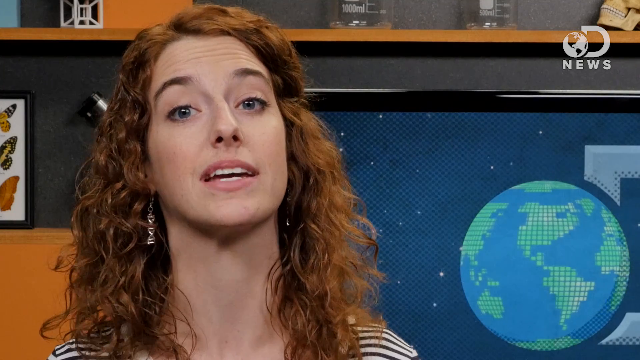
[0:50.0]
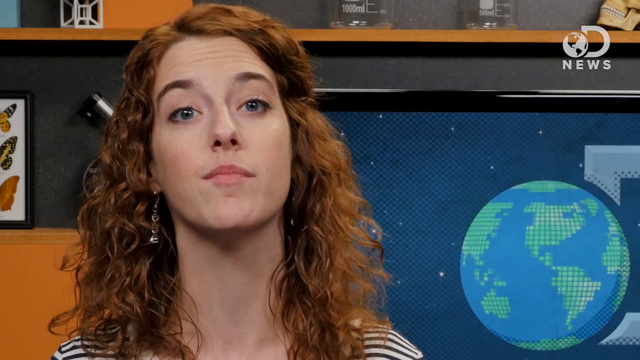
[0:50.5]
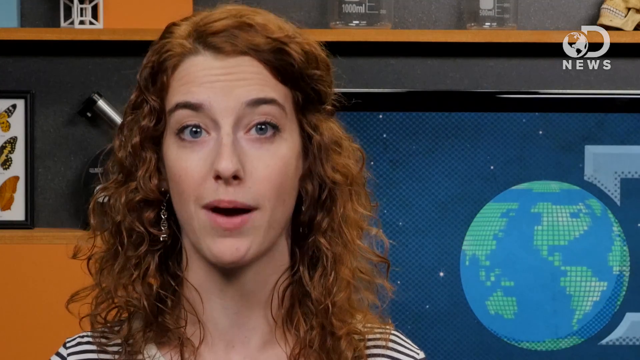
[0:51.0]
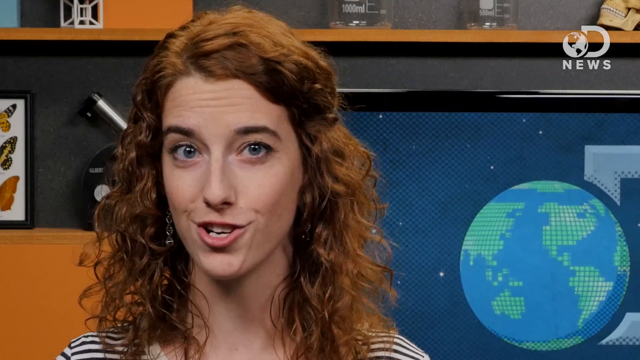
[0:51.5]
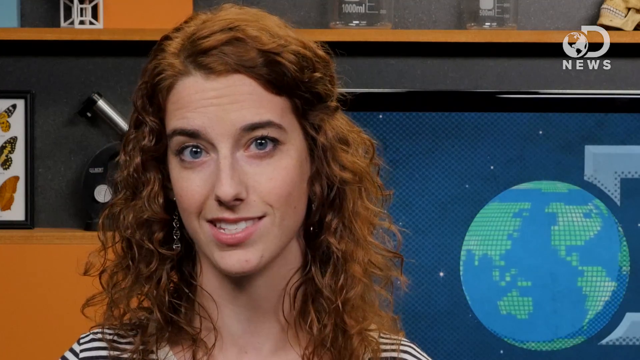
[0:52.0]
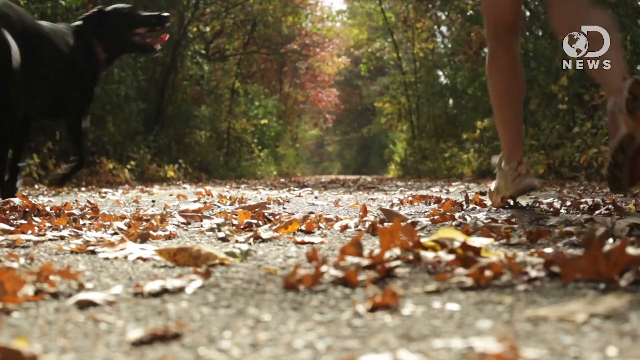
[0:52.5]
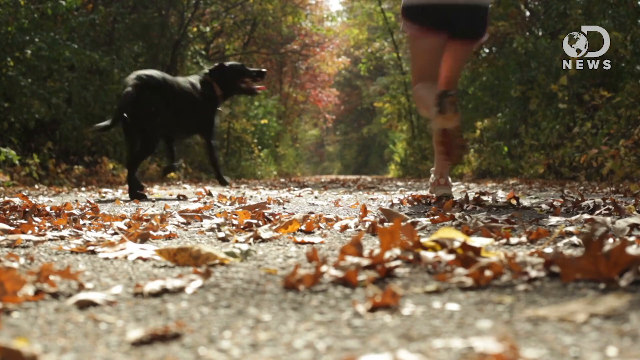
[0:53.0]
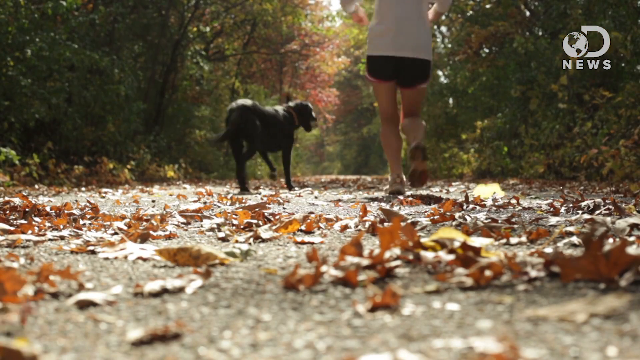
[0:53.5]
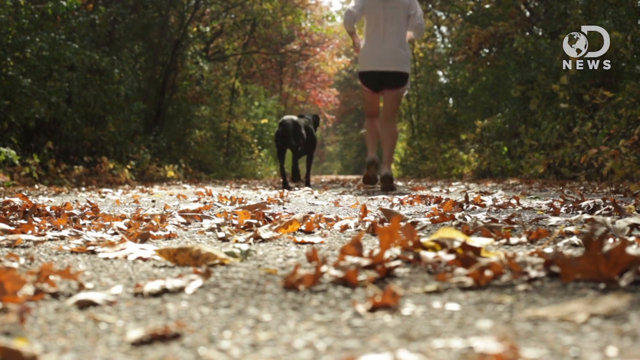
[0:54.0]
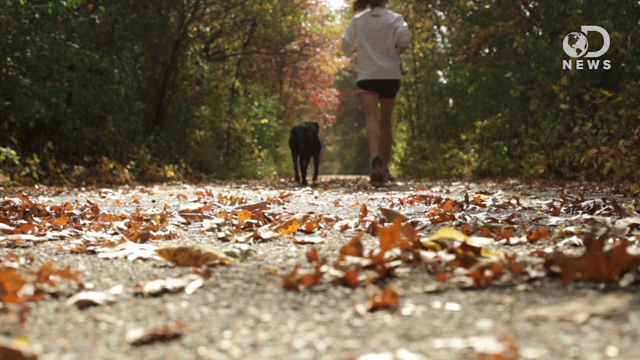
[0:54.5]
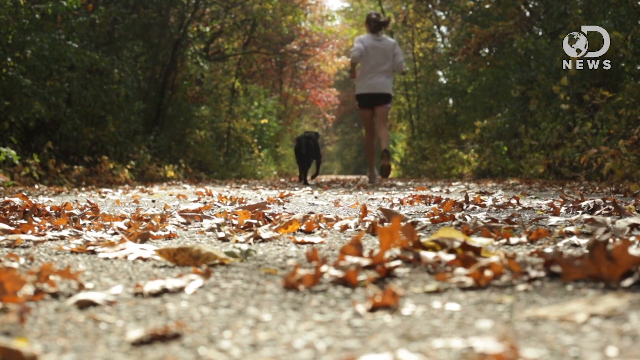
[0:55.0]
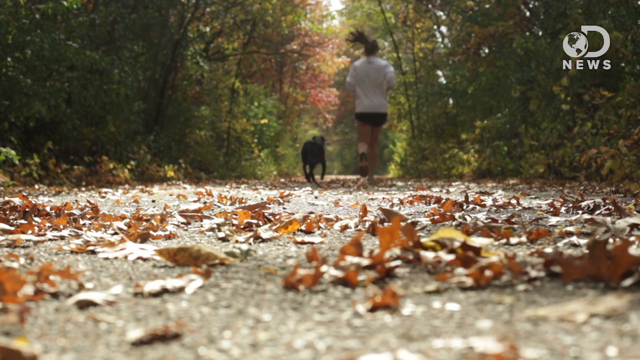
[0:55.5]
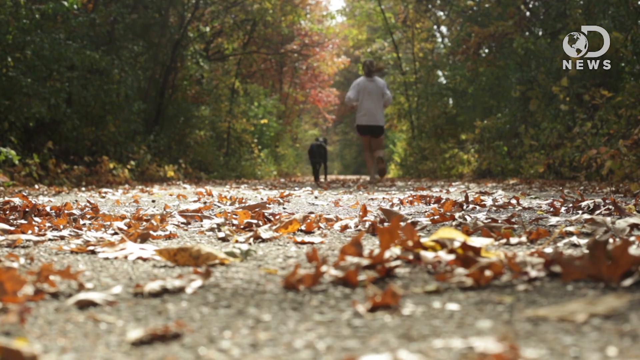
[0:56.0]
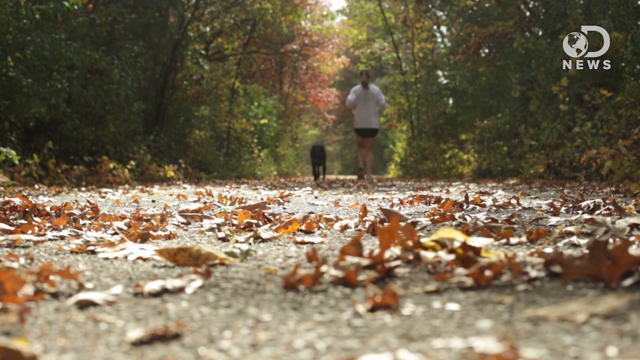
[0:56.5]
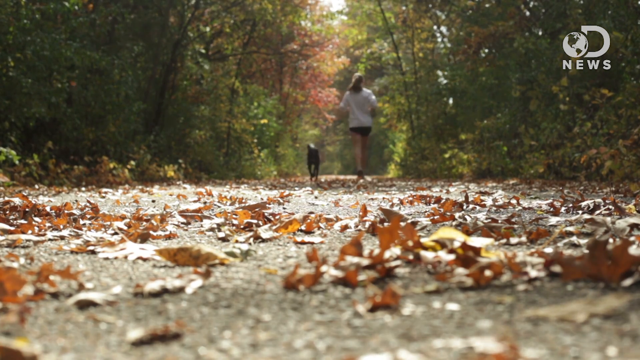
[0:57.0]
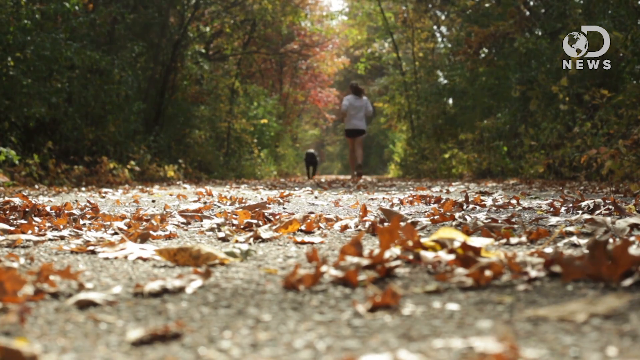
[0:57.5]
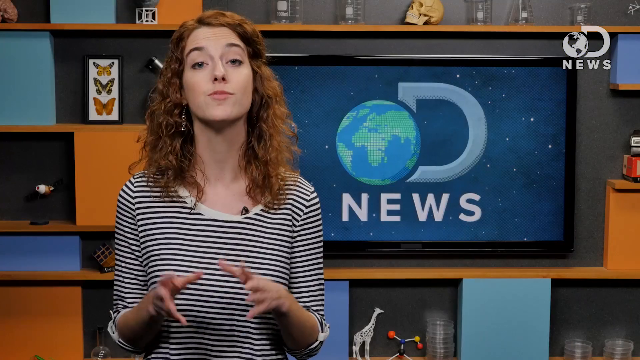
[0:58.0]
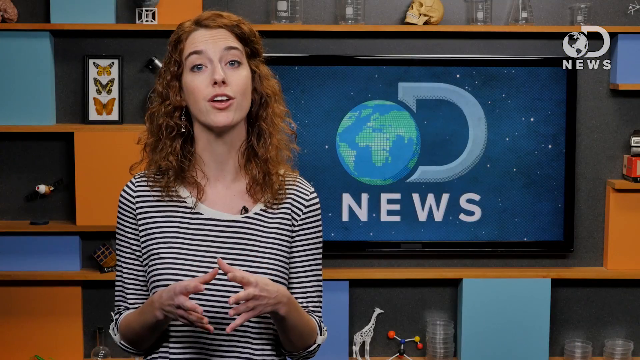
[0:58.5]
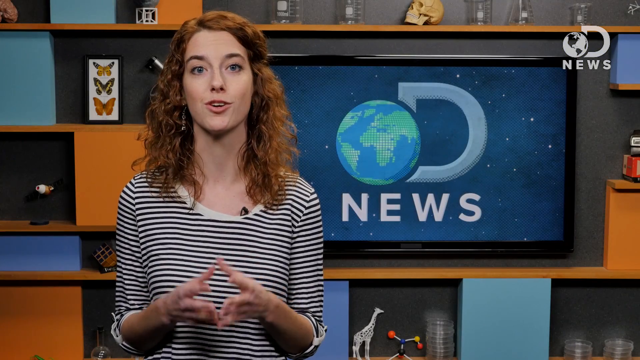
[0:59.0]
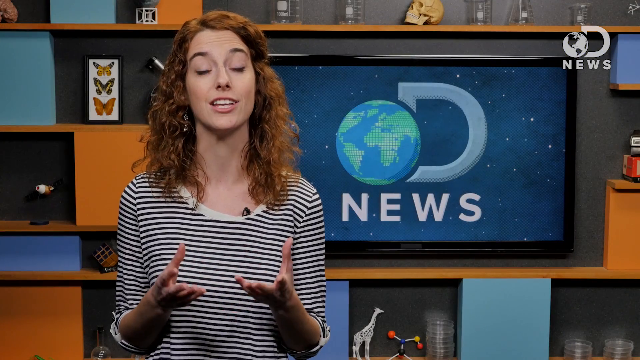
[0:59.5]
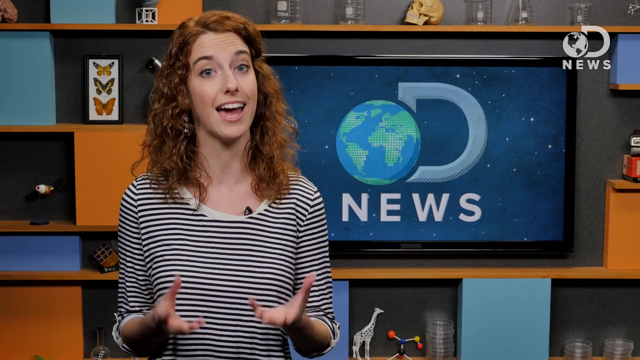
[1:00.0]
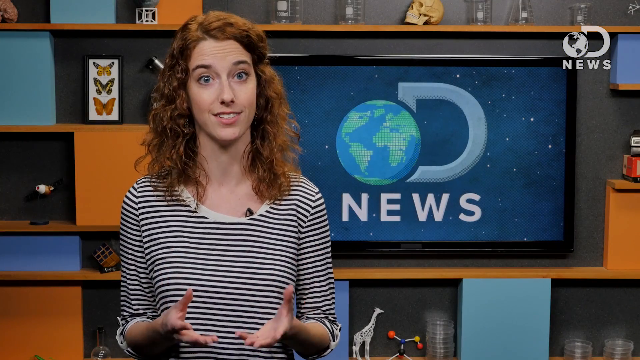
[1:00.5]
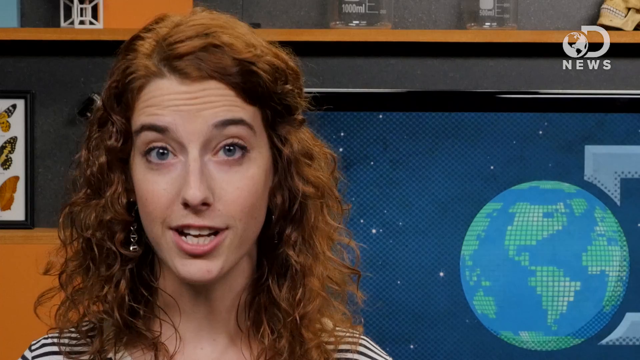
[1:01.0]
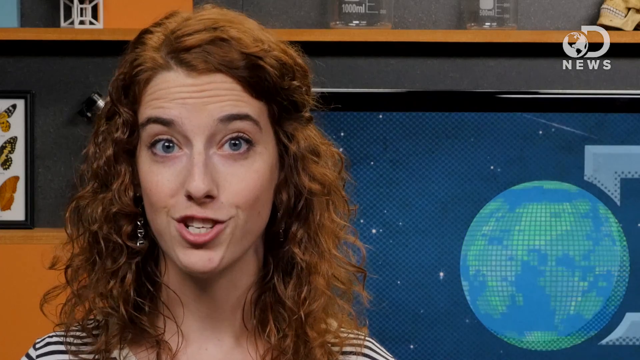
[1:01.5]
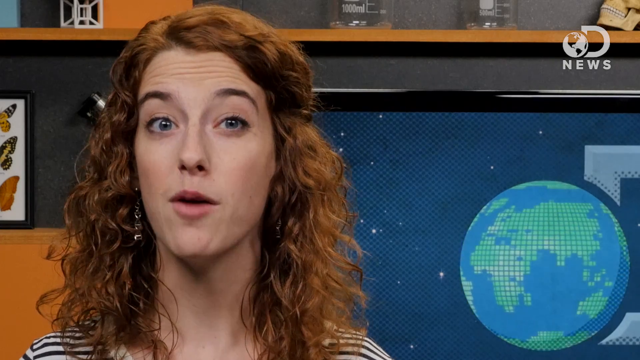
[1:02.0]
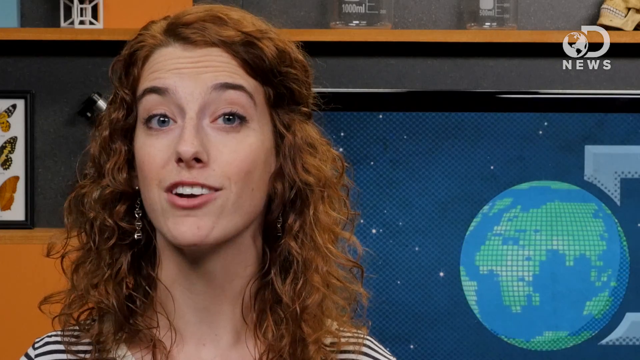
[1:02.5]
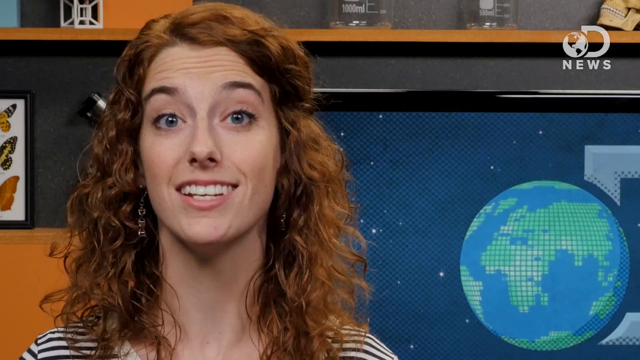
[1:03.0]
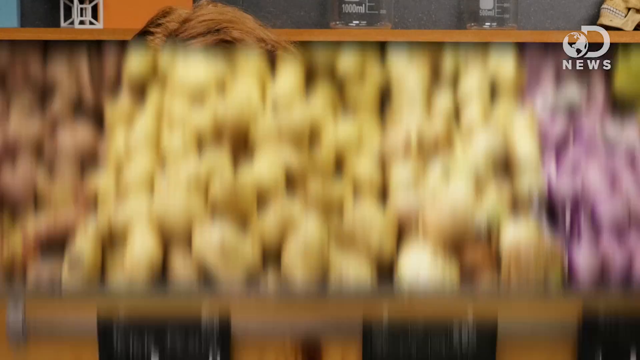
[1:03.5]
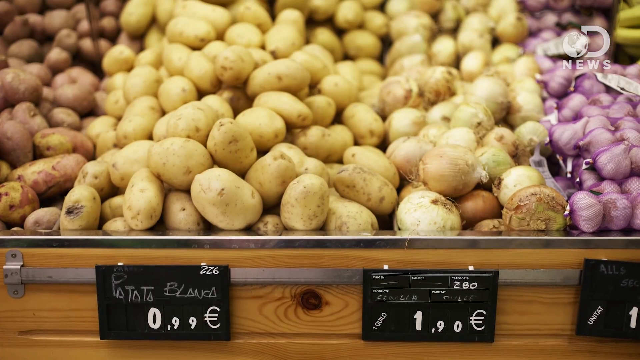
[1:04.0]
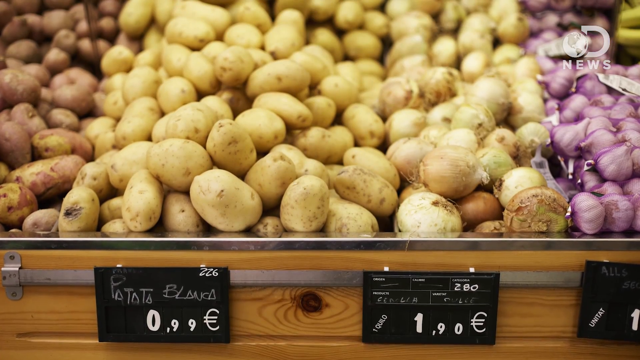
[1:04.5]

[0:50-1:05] A woman is in front of a TV showing a spinning earth and the word "news." The host, a woman with long, curly red hair, speaks. Next, a woman jogs on a trail with her dog, a black Labrador. The video moves back to the host speaking, then to the woman jogging on a trail through a wooded area, like a forest. It returns to the red-haired woman talking, then shows a grocery store display of potatoes and garlic with prices, and then returns to her. She talks a lot with her hands. The three main scenes are the woman talking, a woman jogging with her dog, and a bin of potatoes and garlic in a grocery store.